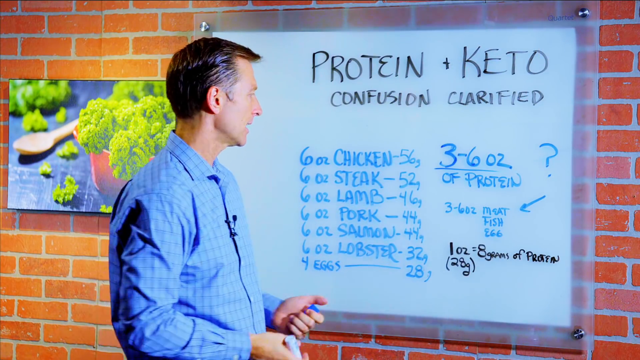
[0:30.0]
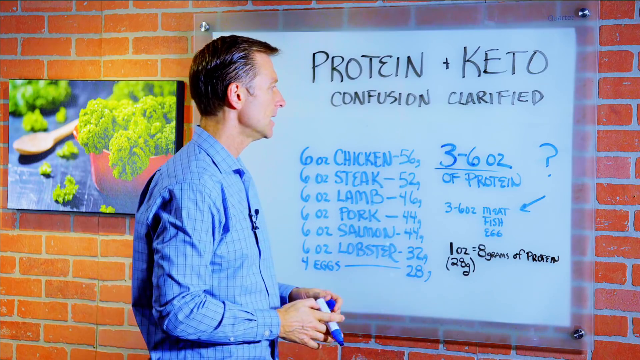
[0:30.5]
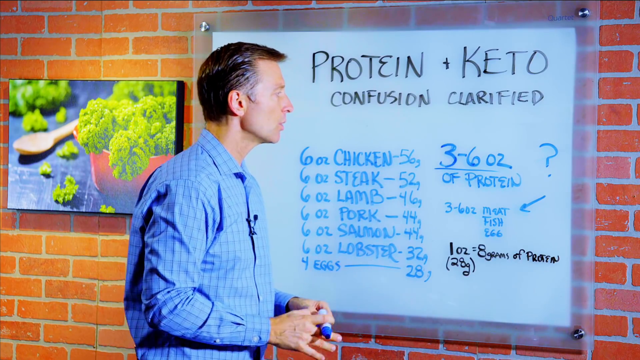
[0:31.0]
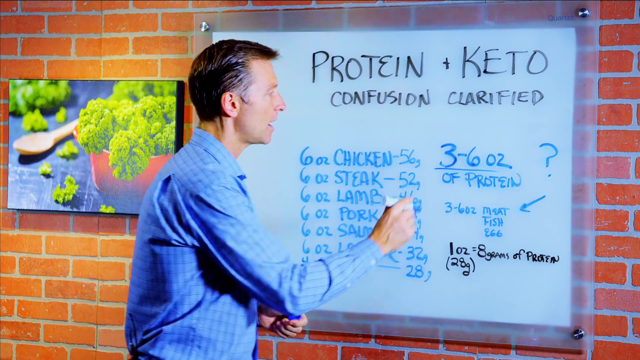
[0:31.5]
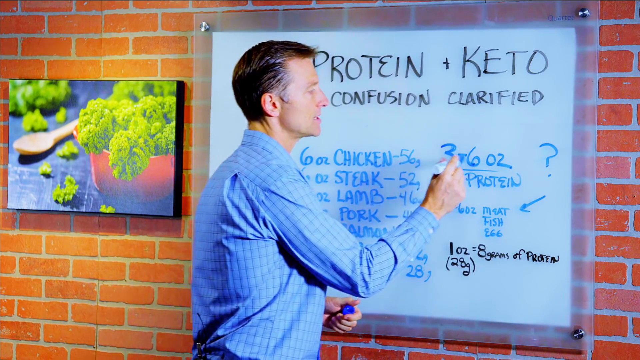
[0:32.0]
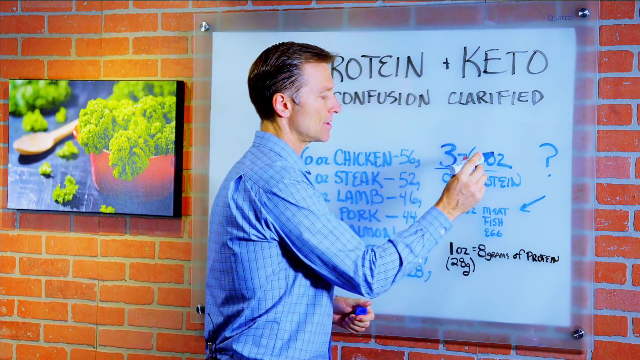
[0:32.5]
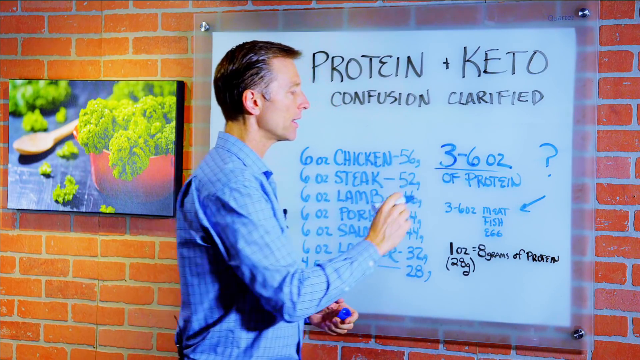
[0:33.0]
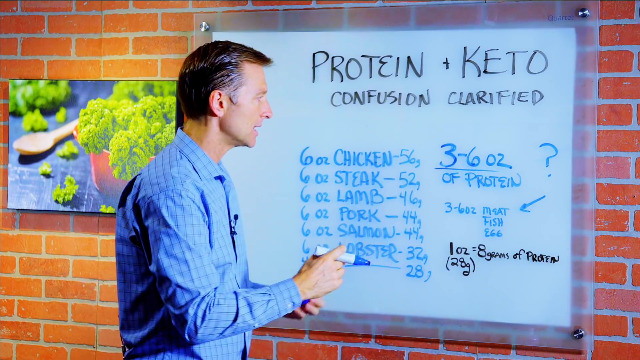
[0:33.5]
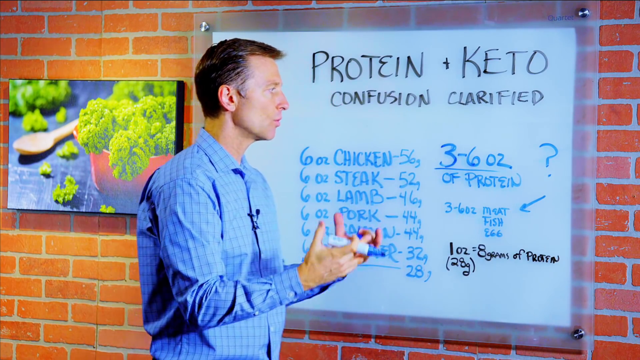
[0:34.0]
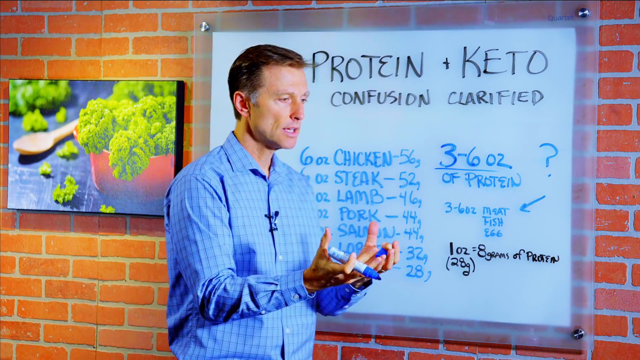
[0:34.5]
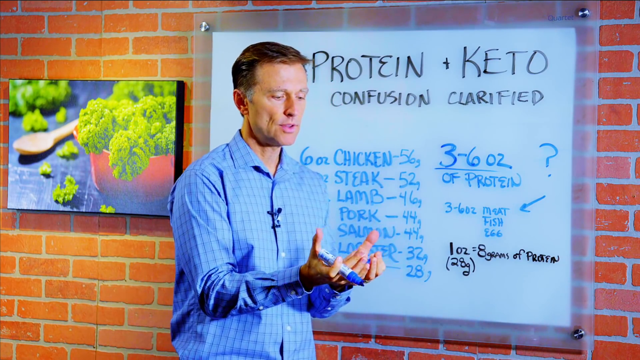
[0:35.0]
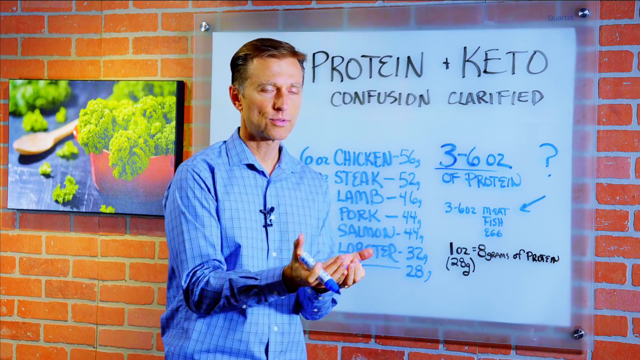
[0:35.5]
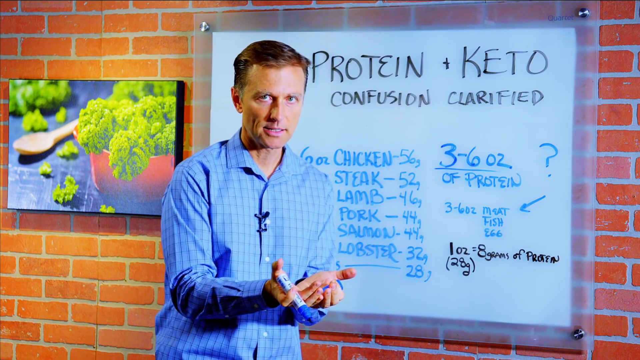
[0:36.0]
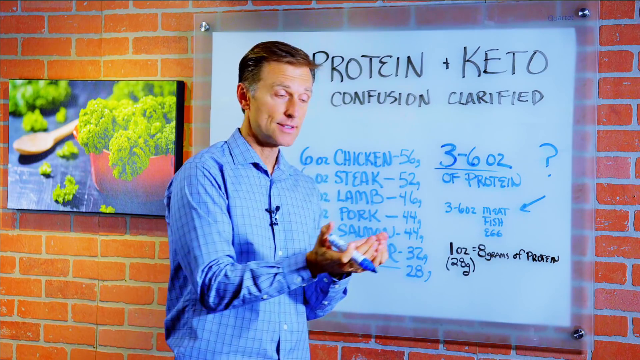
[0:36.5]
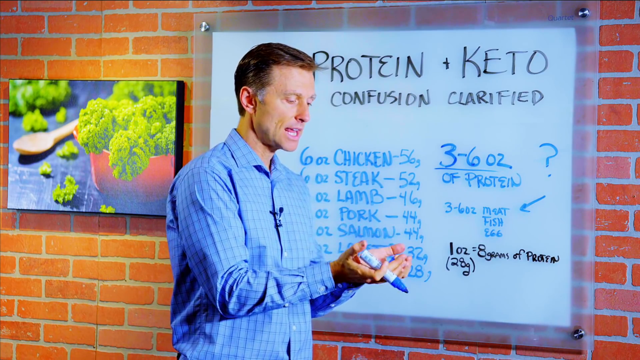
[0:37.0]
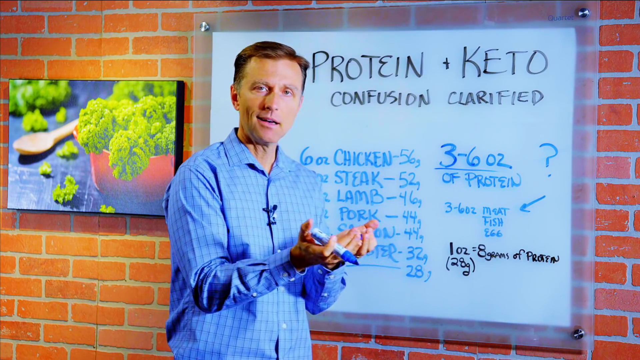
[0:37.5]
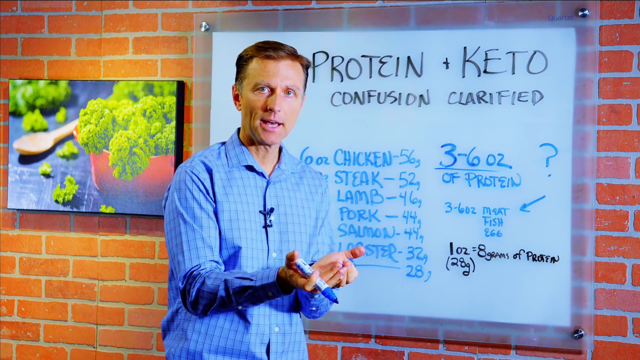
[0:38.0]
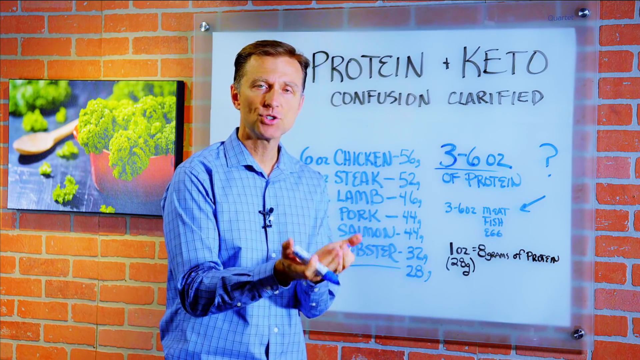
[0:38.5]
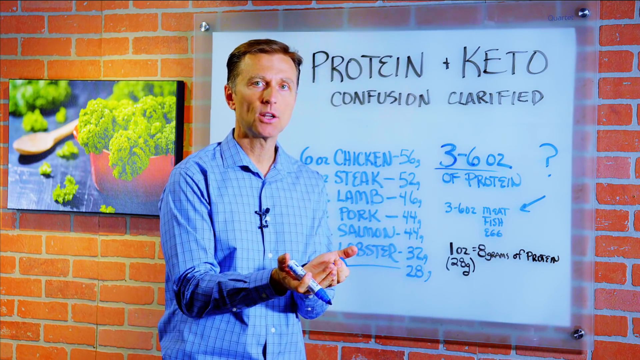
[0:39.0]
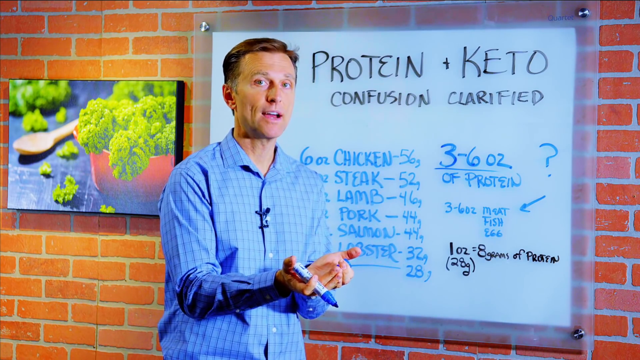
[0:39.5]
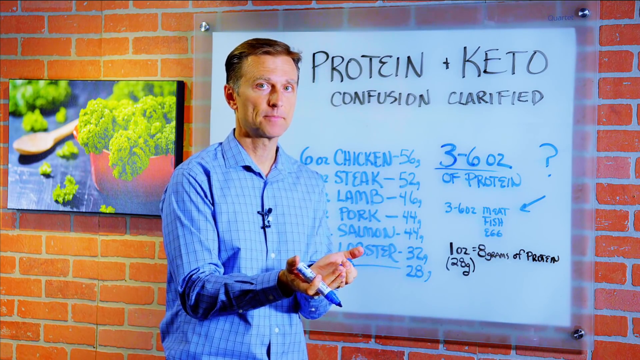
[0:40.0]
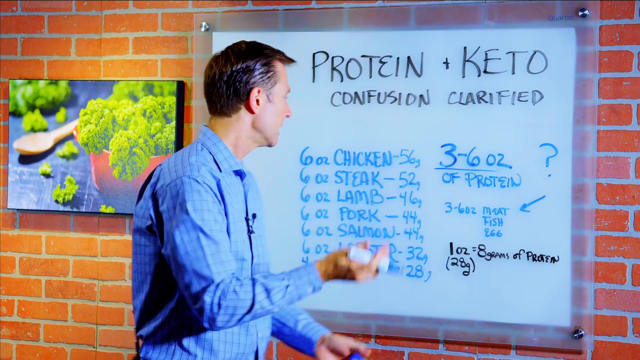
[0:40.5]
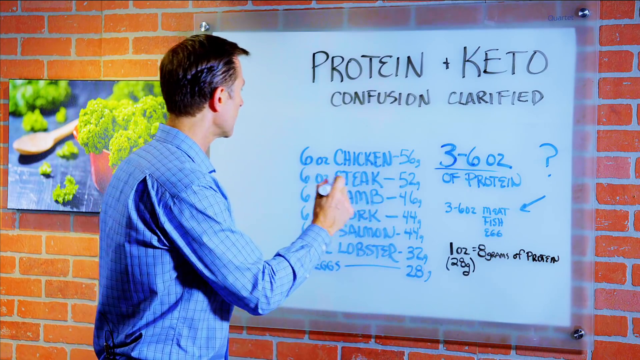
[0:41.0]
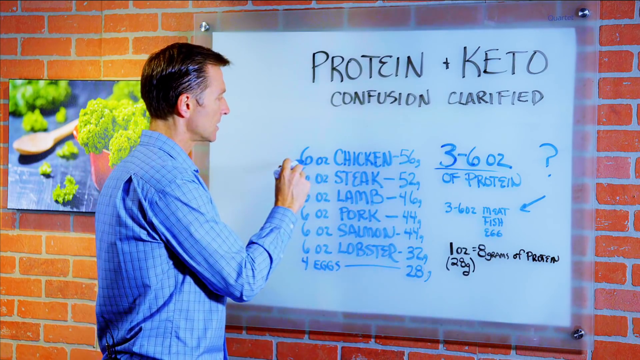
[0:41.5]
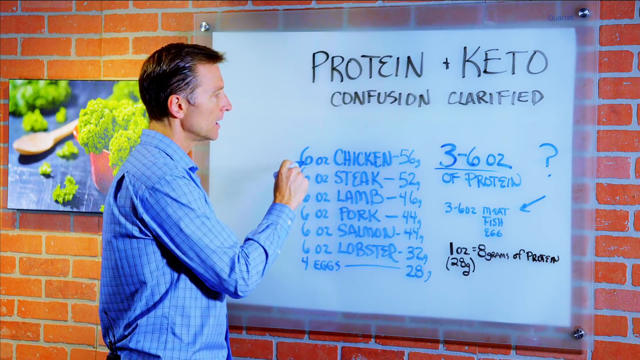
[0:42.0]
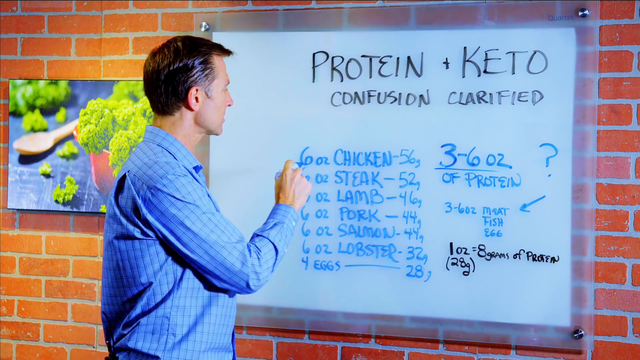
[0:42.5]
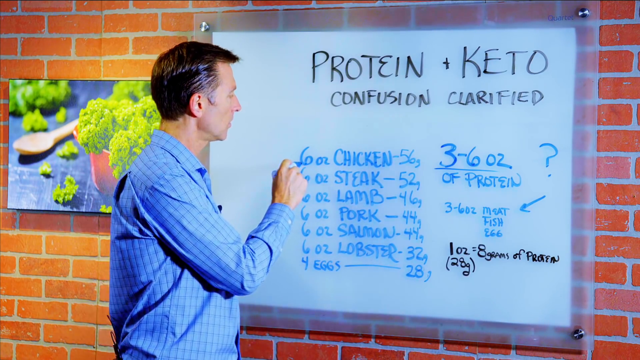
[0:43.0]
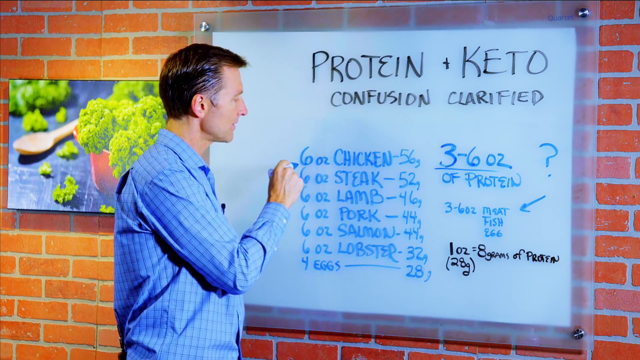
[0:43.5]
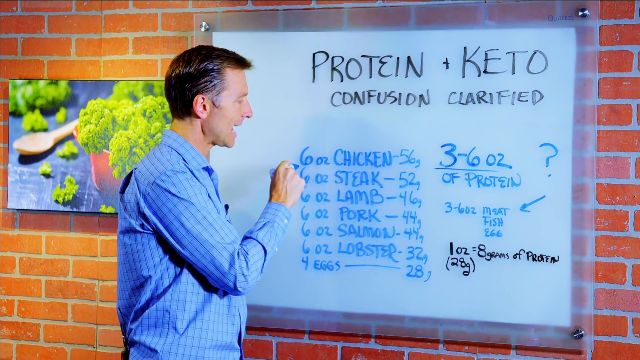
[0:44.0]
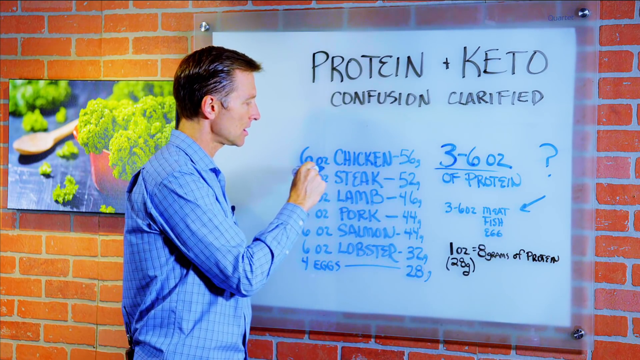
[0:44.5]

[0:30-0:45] The man stands at the blackboard, continuing to use his hands as he explains the things on the board, at times holding his hands out in different shapes. The board reads "protein confusion" and "keto clarified" and lists different protein items in ounce portions. He underlines where it says "six ounces of chicken". Below that it lists steak, lamb, pork, salmon and lobster, all in six-ounce portions, and below that "four eggs", all in blue text. He then points to the right side of the board, where it reads "three ounces of protein".